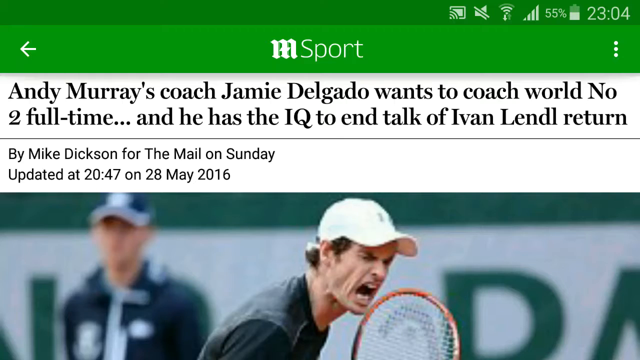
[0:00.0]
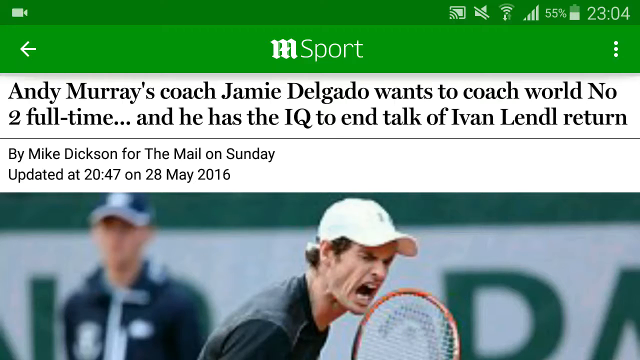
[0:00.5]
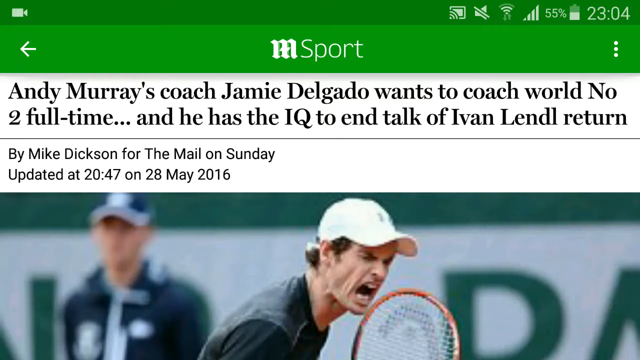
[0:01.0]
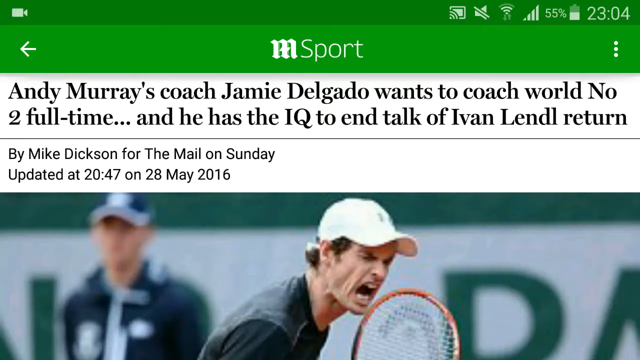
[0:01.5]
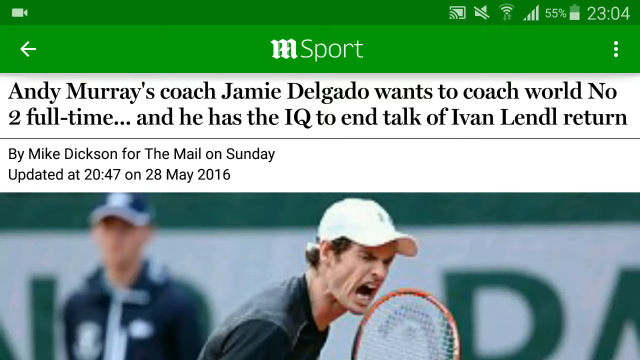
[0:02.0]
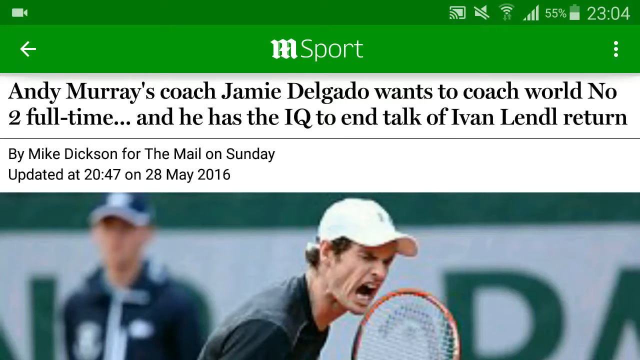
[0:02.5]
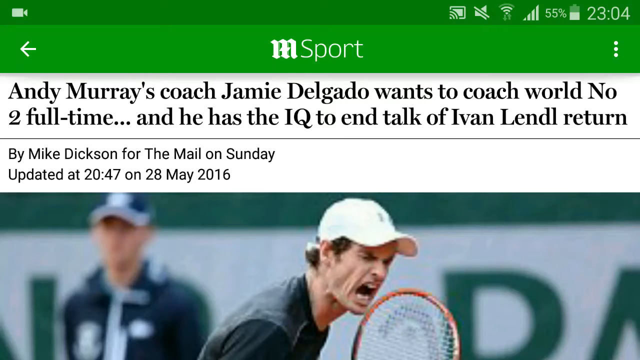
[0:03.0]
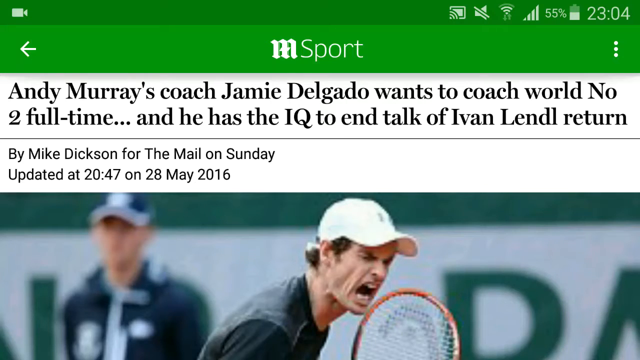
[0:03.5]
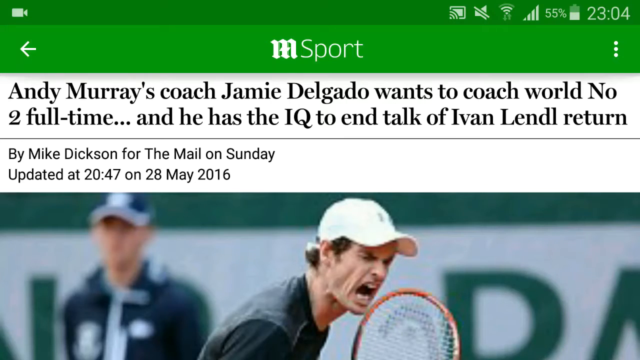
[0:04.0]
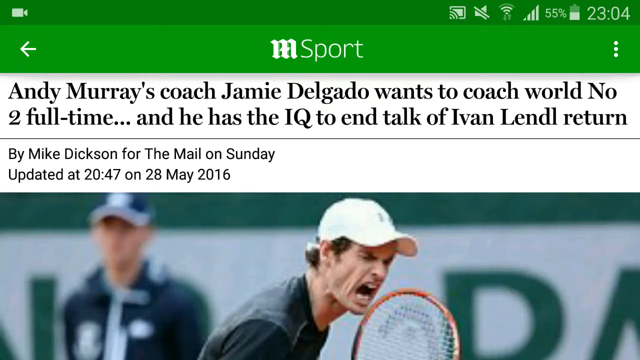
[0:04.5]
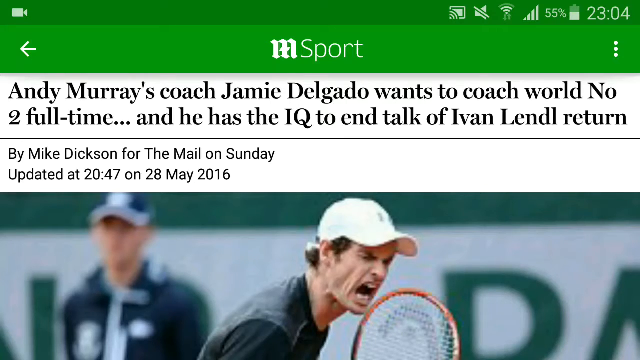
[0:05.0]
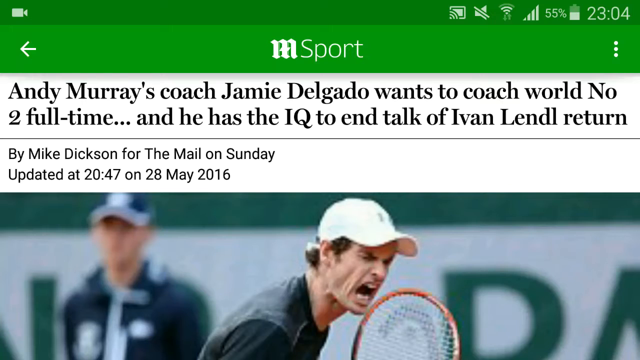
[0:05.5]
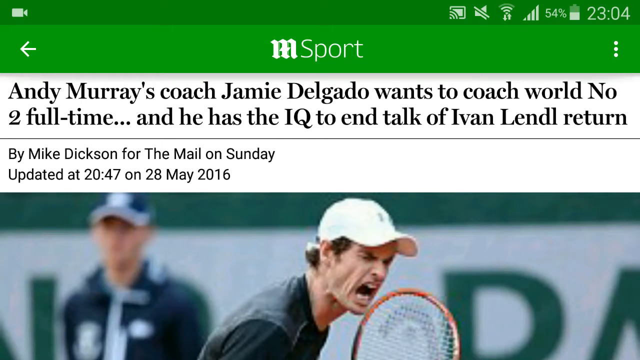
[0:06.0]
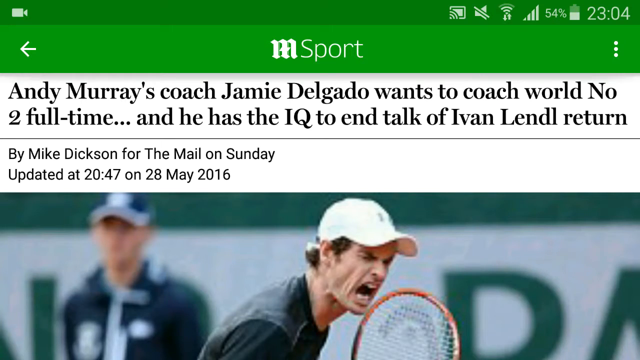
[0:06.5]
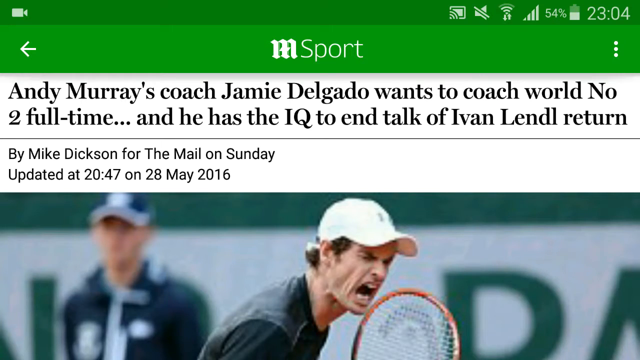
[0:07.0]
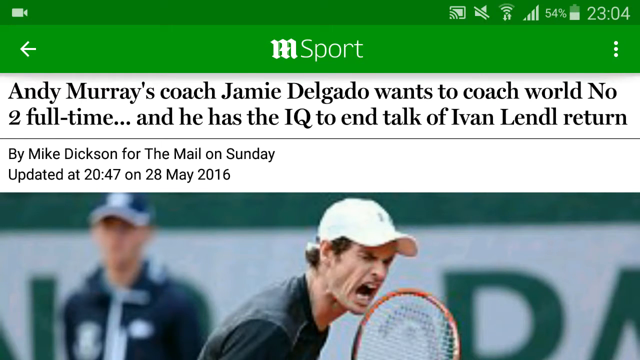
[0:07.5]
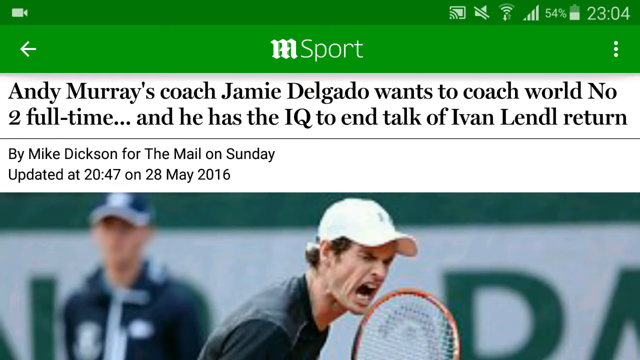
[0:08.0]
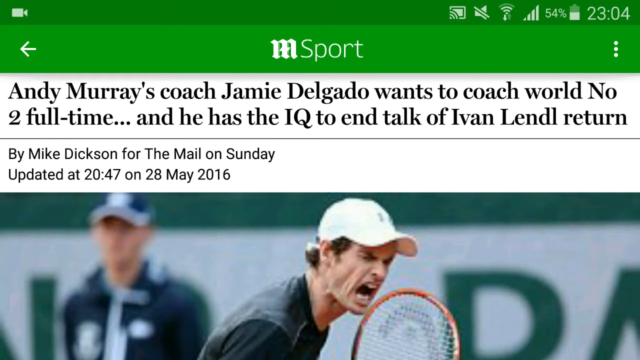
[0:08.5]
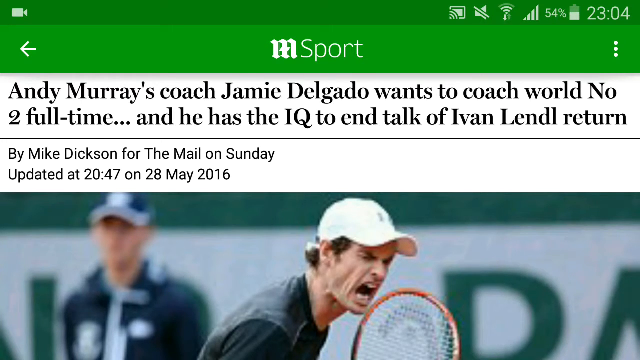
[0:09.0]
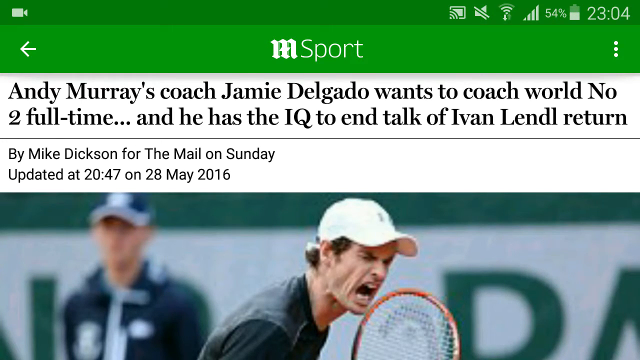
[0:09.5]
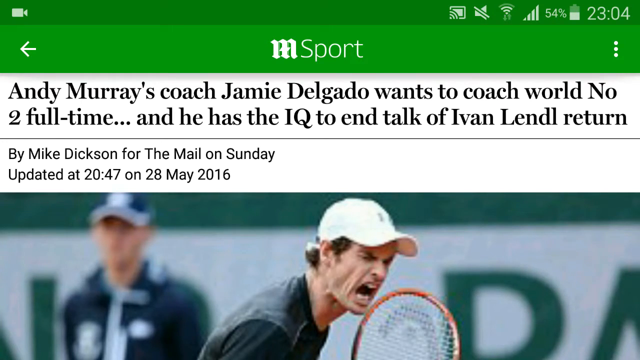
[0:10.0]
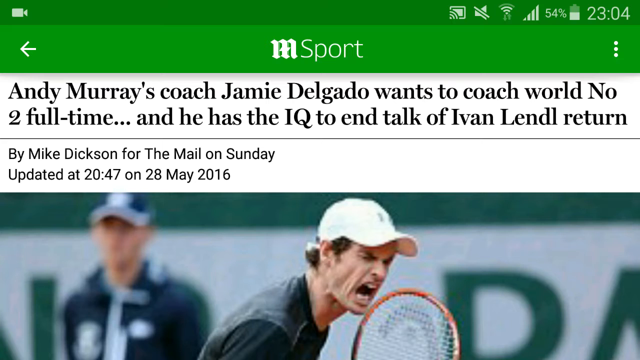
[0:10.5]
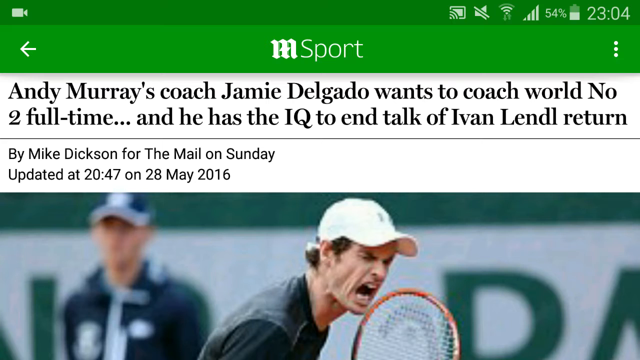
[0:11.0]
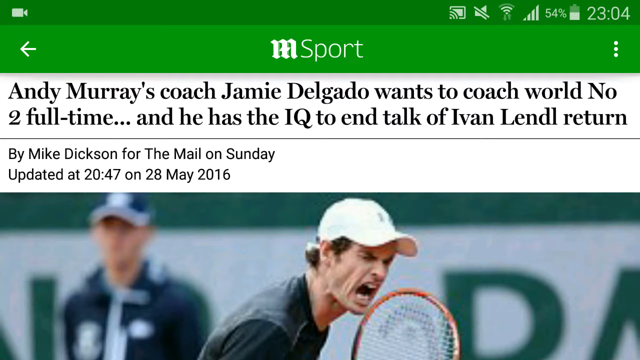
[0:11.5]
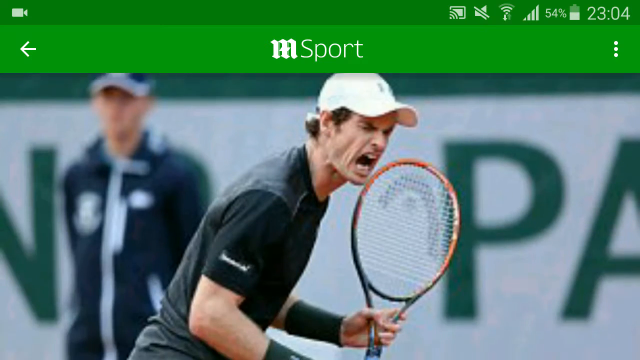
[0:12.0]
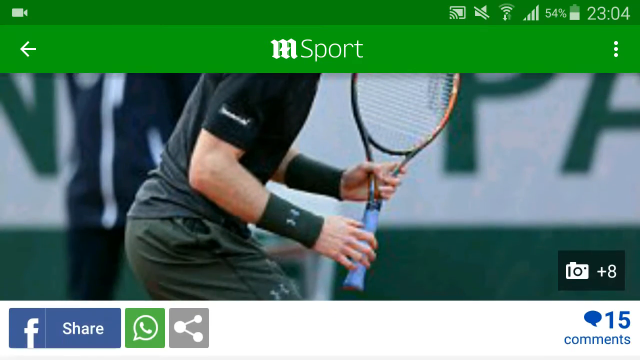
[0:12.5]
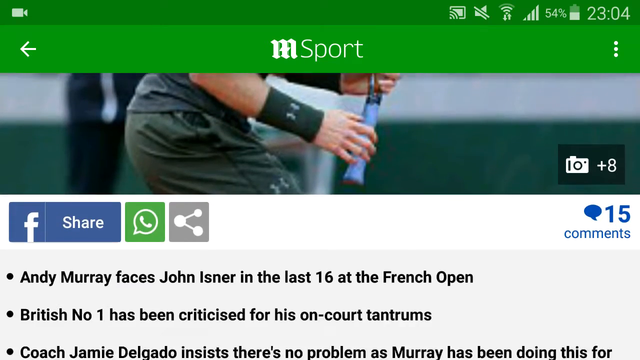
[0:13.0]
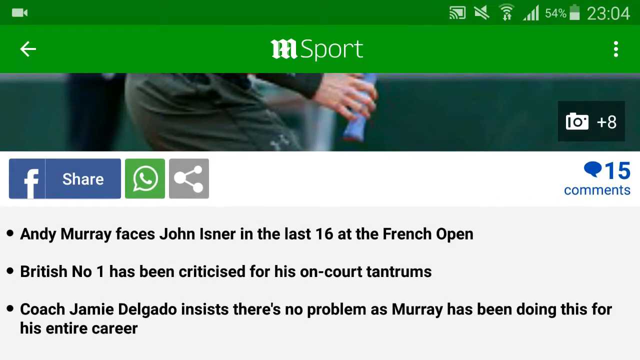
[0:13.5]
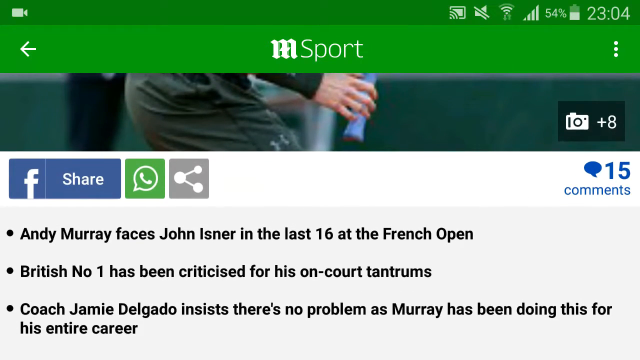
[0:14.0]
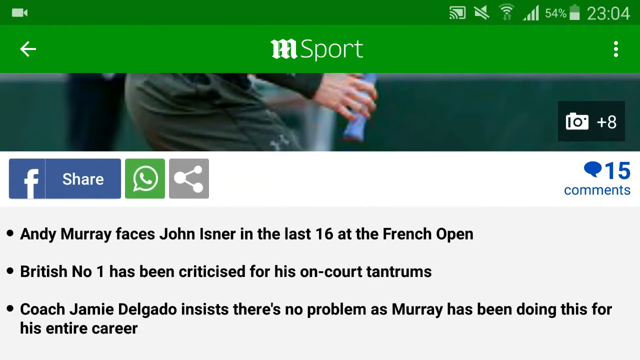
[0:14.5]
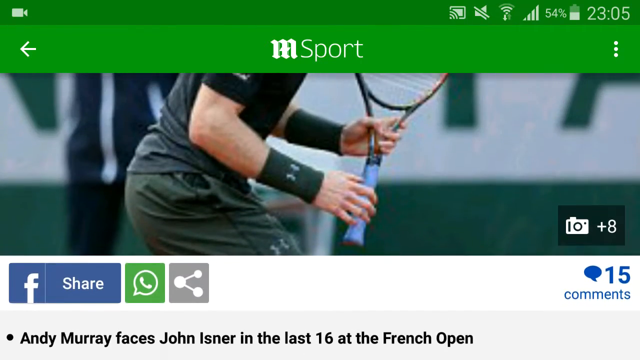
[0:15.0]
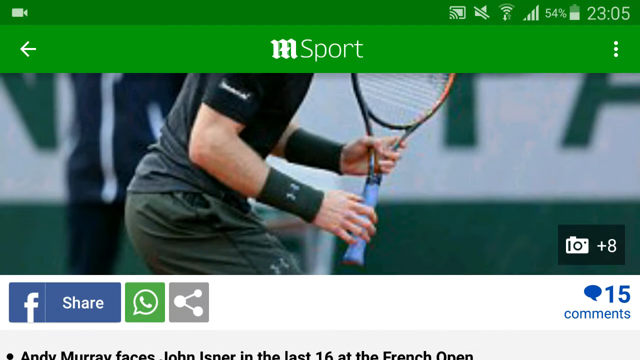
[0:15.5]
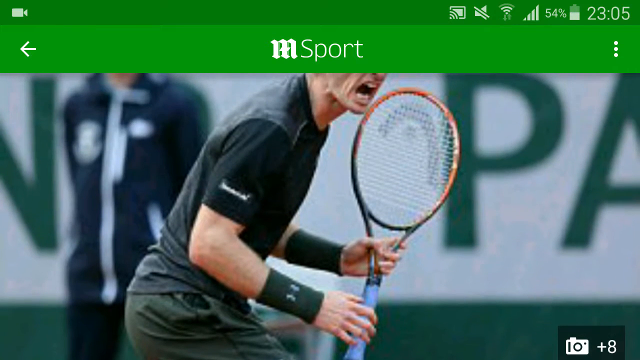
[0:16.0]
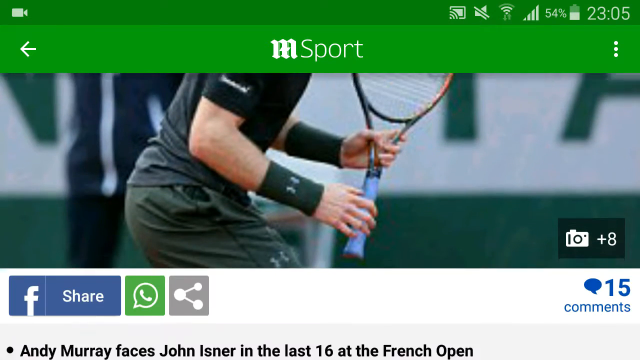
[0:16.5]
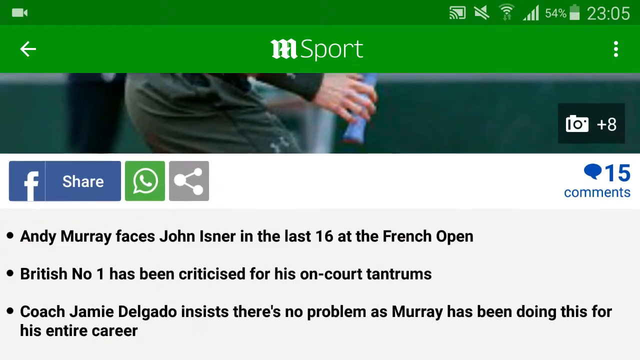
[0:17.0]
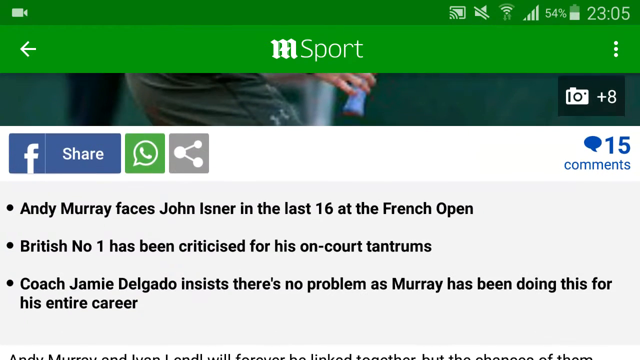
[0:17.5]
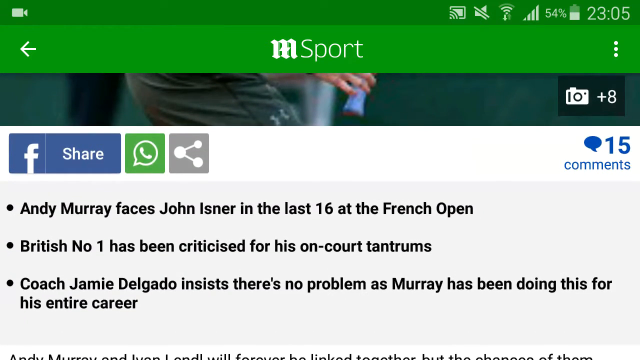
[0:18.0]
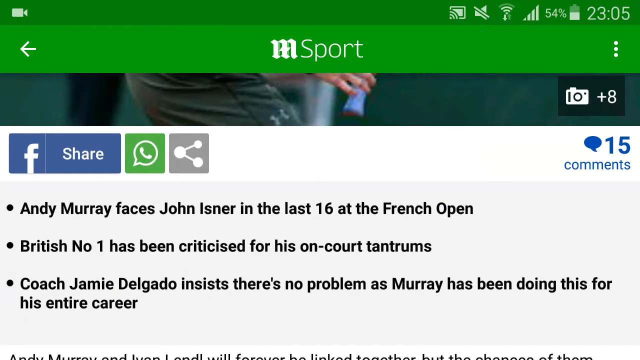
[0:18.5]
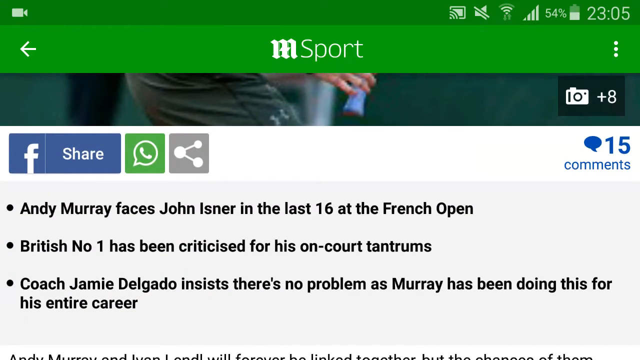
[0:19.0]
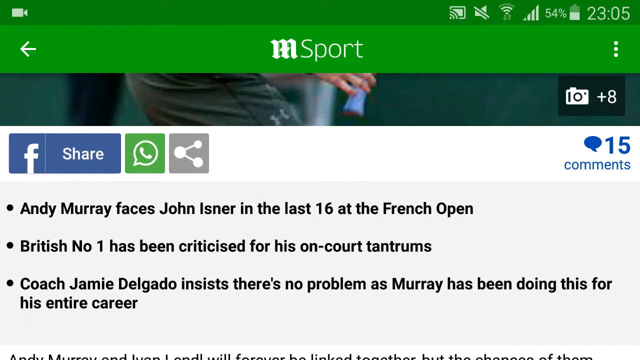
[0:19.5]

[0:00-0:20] An online article about Andy Murray is displayed on what appears to be a mobile device, with the battery level shown at 55%. "mSport" appears at the top of the screen. The title reads "Andy Murray's coach Jamie Delgado wants to coach world number two full-time", followed by "Andy has the IQ to end talk of a…". Below that is a photo of Andy Murray, who has won a point and is celebrating very aggressively. The byline credits Mike Dickerson for the Mail on Sunday, 28 May 2016. The text is black on a white background above the photo. The page is scrolled down, revealing Facebook and WhatsApp links for sharing the article, and on the right a count of 15 comments. Below the Facebook logo are three dot points: "…faces John Ischner in the last 16 at the French Open", "British No. 1 has been criticized for his on-court tantrums", and "coach Jamie Delgado says there's no problem if Andy Murray has been doing this for his entire career". These are in black text on a light grey background.